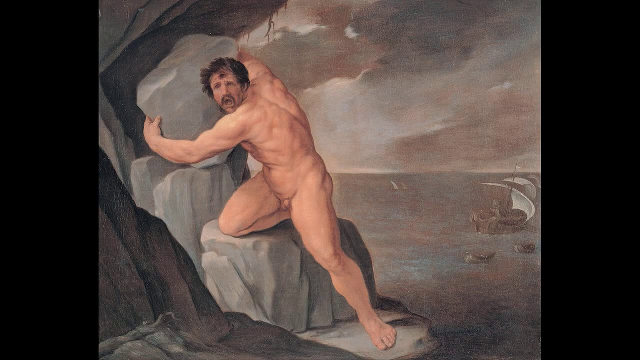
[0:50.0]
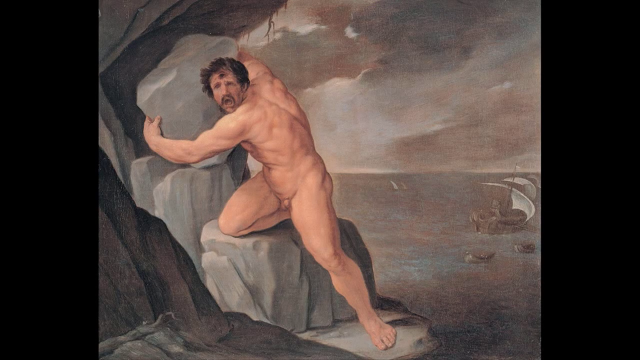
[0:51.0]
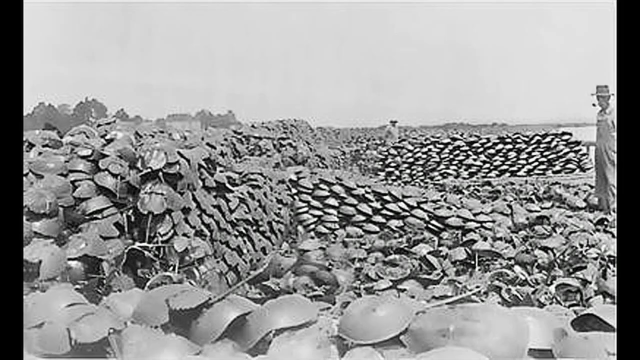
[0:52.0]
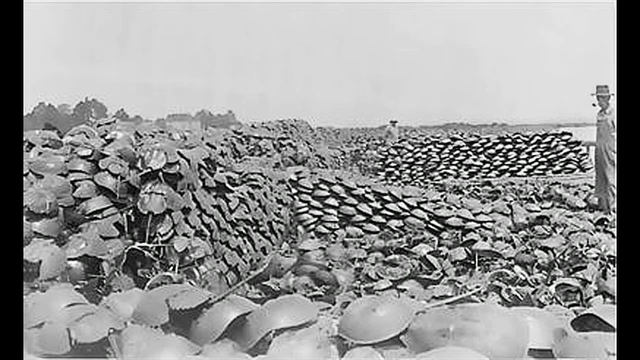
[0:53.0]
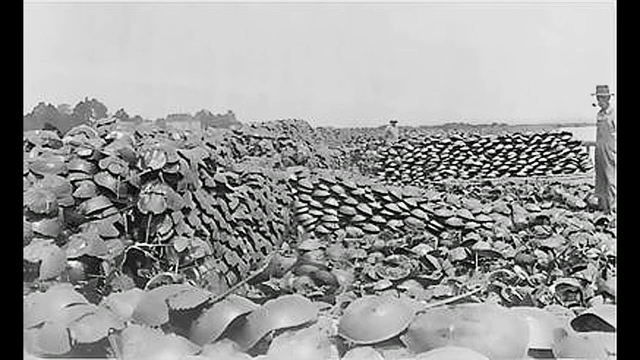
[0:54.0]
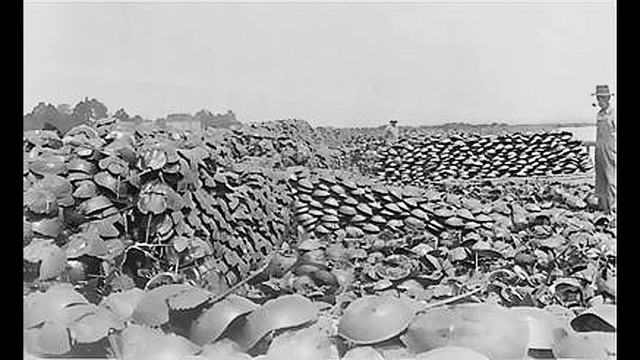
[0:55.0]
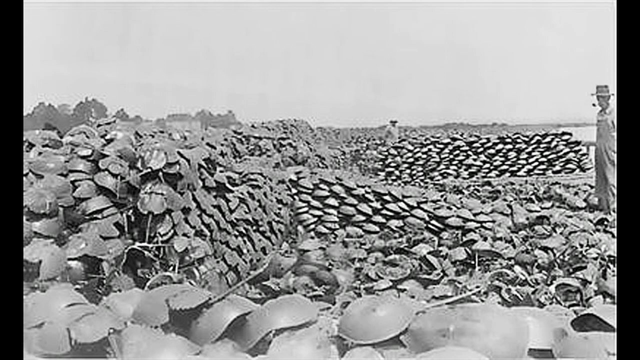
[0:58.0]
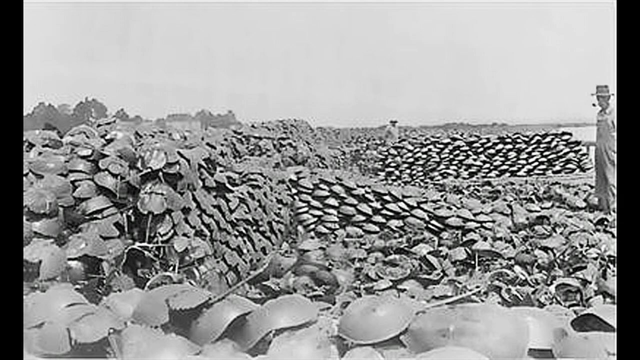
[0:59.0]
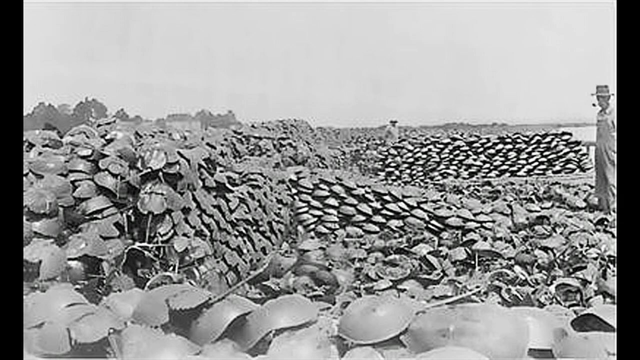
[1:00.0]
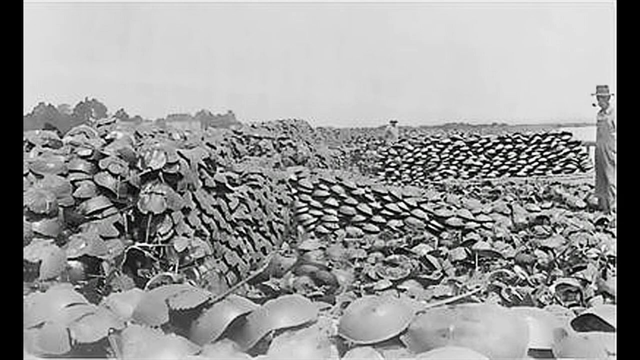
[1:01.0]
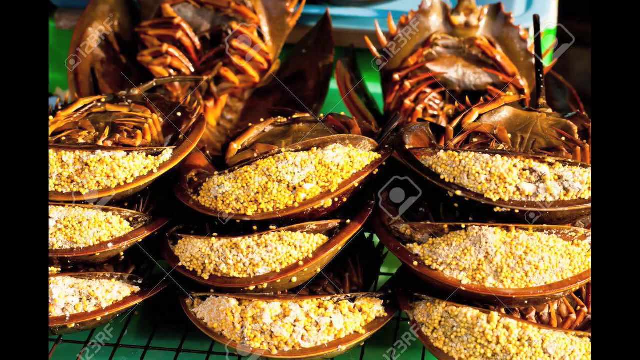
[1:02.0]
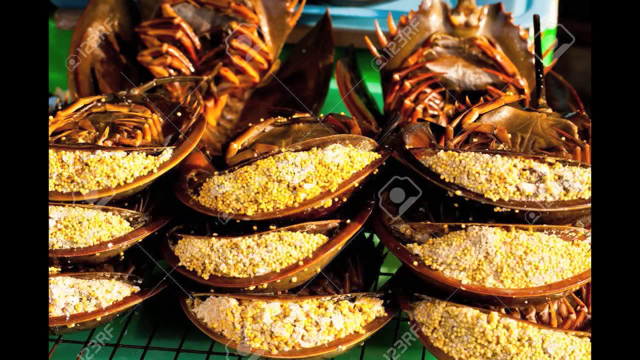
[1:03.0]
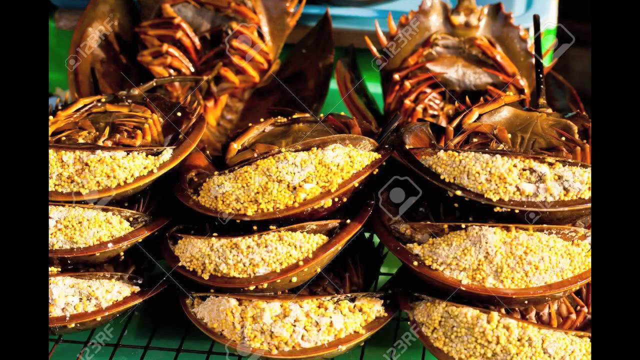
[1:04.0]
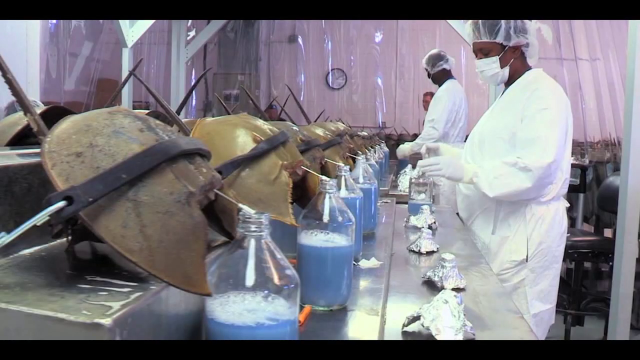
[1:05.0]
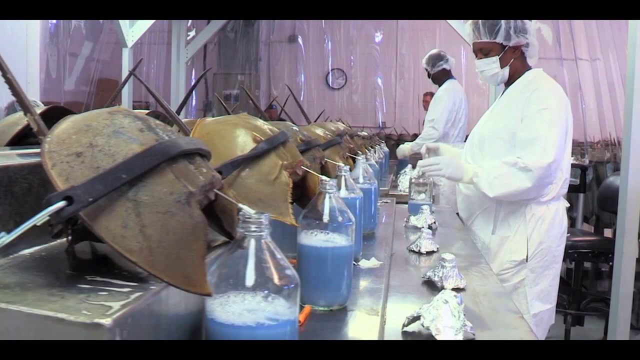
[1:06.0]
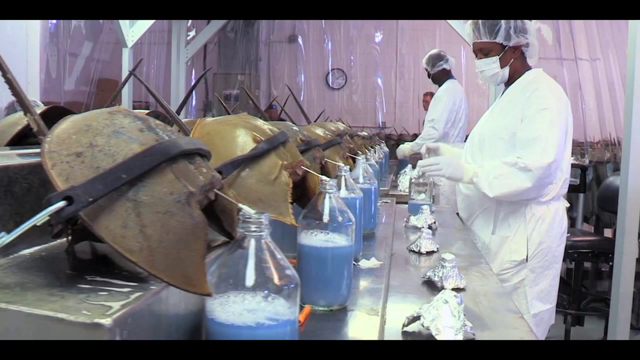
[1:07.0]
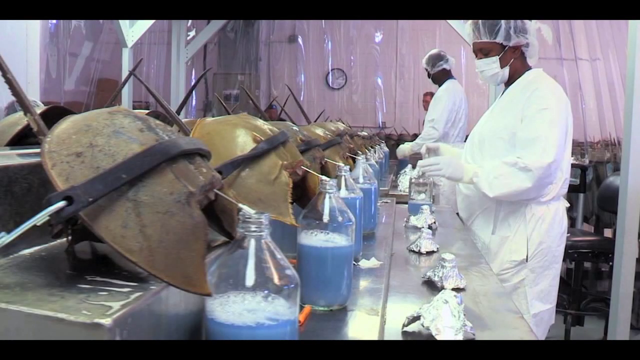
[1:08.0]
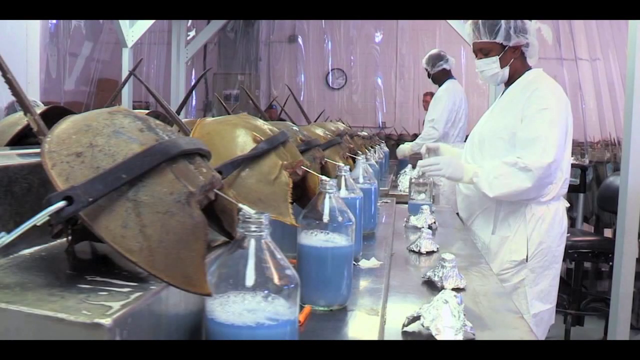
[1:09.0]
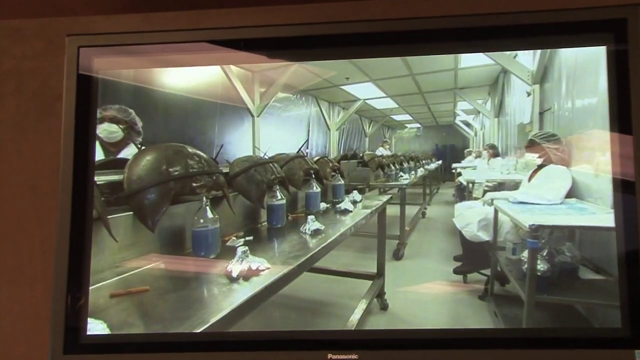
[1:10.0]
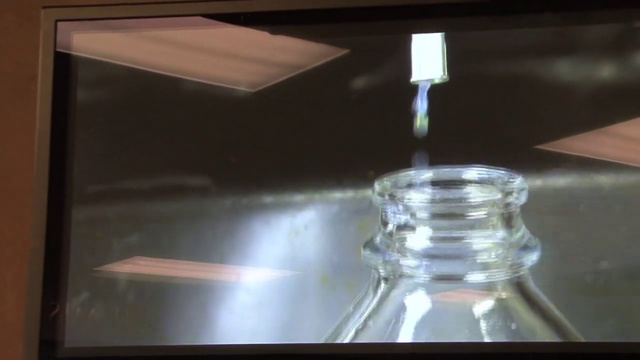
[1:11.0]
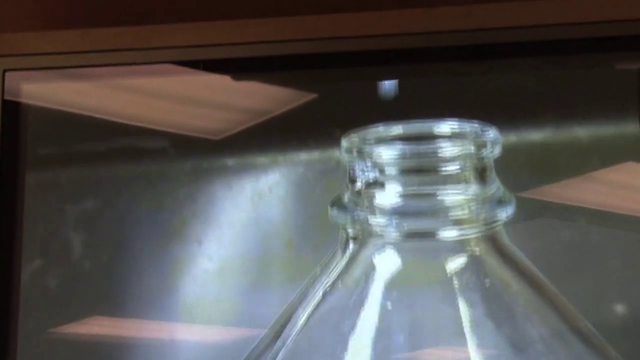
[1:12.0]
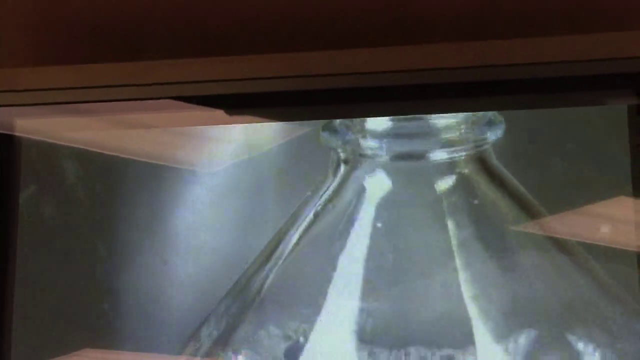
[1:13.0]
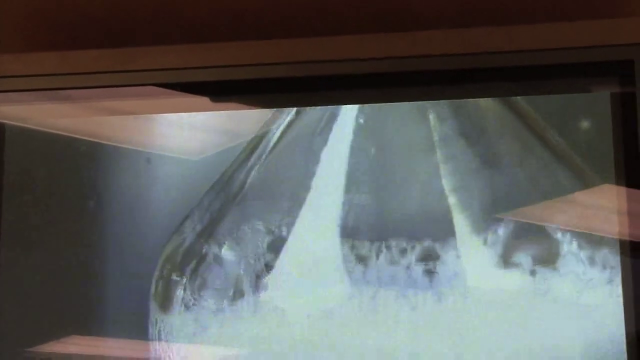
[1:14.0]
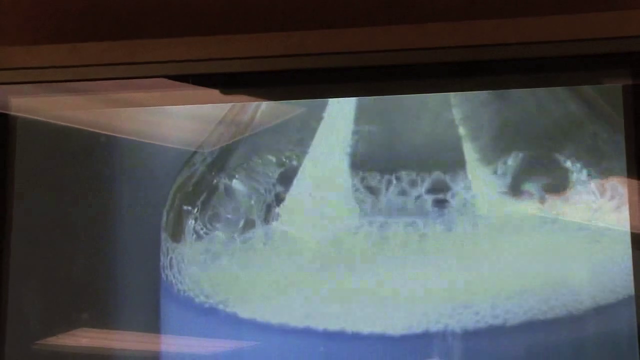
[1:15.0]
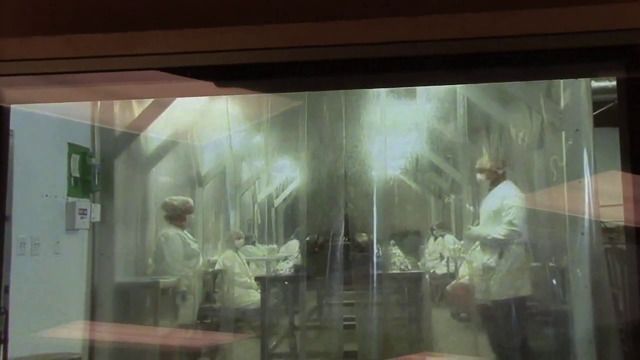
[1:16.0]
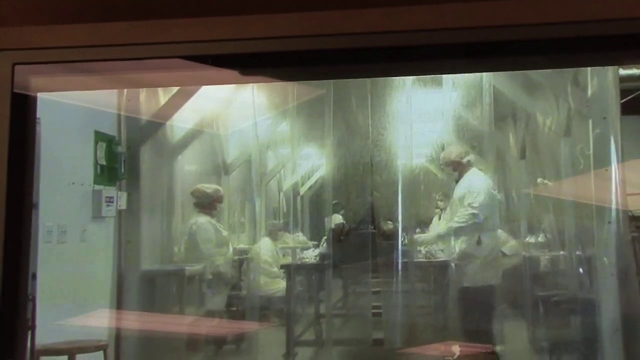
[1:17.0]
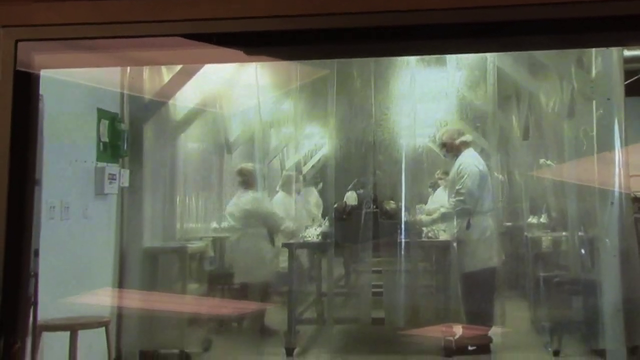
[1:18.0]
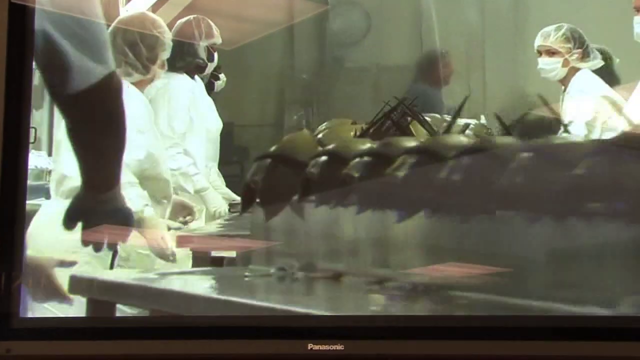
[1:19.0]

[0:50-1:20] The painting looks like it was done in the 18th or 19th century. A black and white photograph taken in the early 20th century shows a pile of dead horseshoe crabs by a beach with two overseers; the crabs appear to have been killed and piled one on top of the other. Next, an image with a watermark, possibly AI-generated, appears to show horseshoe crabs as a delicacy: their shells are overturned and horseshoe crab meat is stuffed into the shells. Horseshoe crabs in a laboratory then appear to be strapped onto something with harnesses. A little tube is inserted into each horseshoe crab, and blue blood is extracted and collected into bottles at some kind of station for collecting the blue blood or blue liquid. A close-up shows the blue liquid falling into a glass bottle below a horseshoe crab. Workers wear lab coats, hairnets and face masks. They are encased in a plastic-like curtain, and the horseshoe crabs are strapped to a kind of metal centrifuge that the workers can apparently spin.